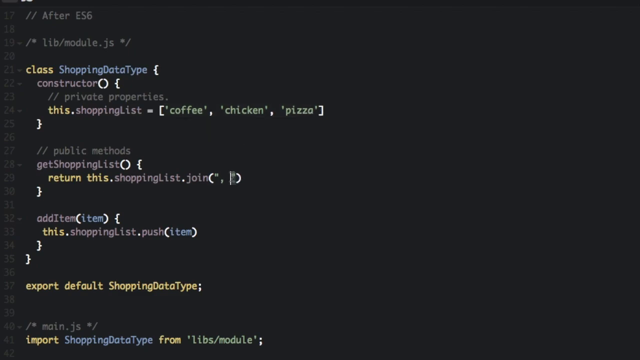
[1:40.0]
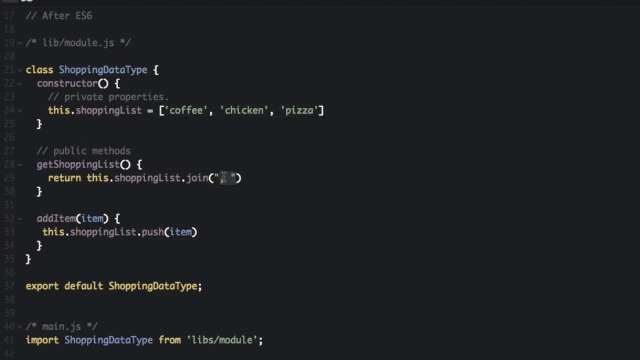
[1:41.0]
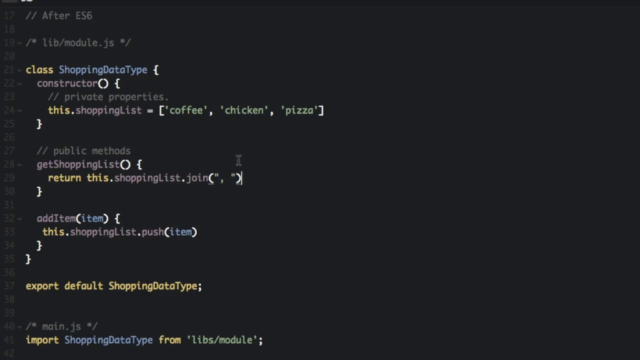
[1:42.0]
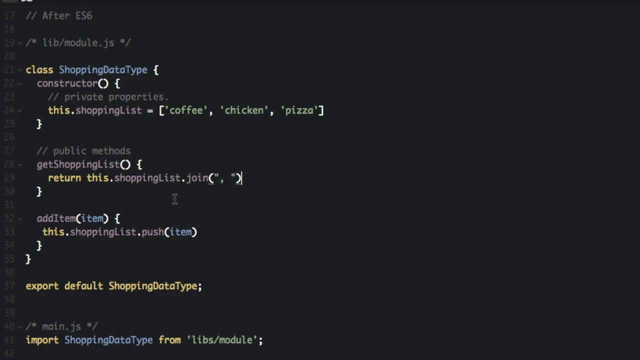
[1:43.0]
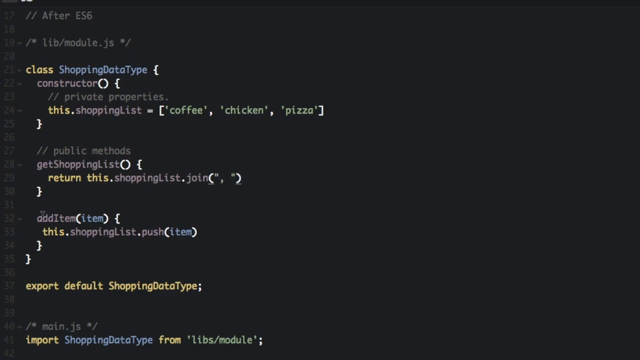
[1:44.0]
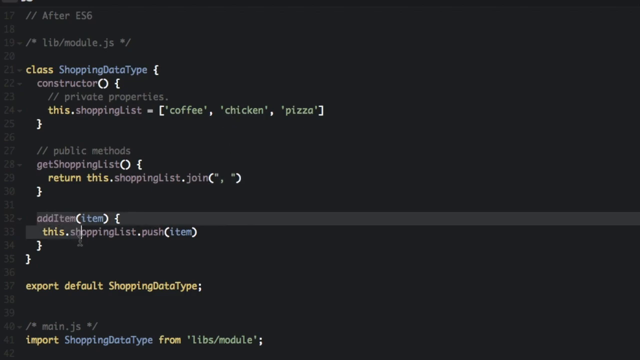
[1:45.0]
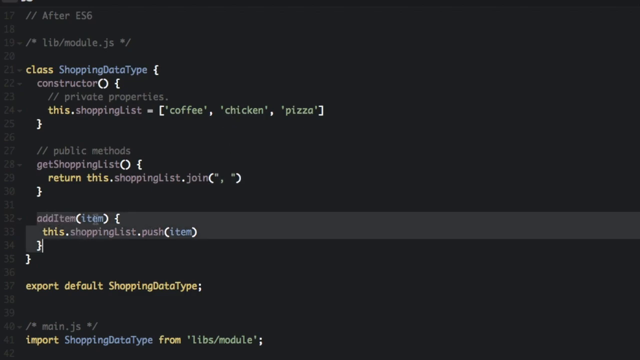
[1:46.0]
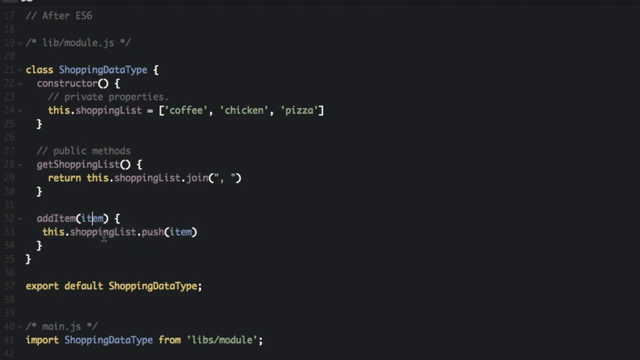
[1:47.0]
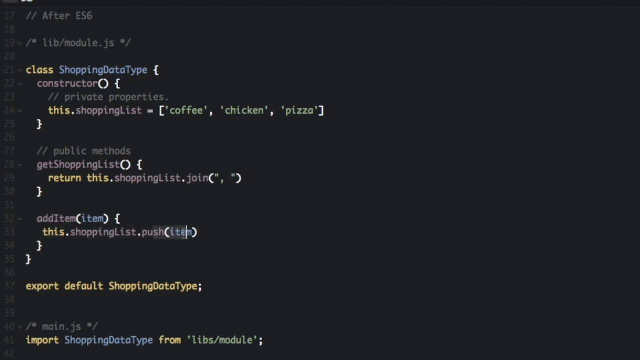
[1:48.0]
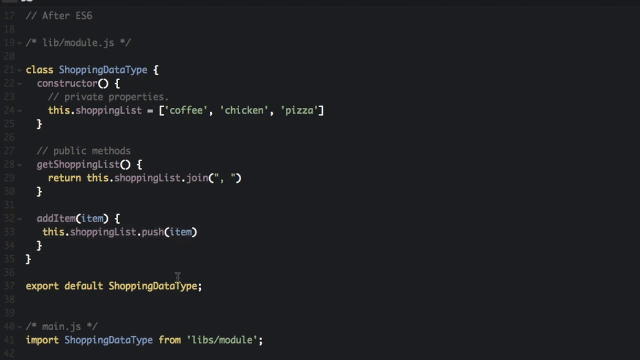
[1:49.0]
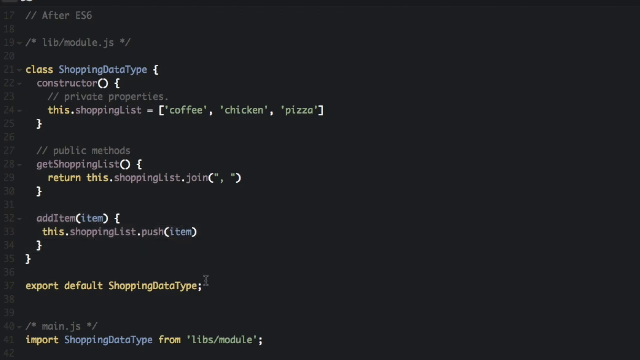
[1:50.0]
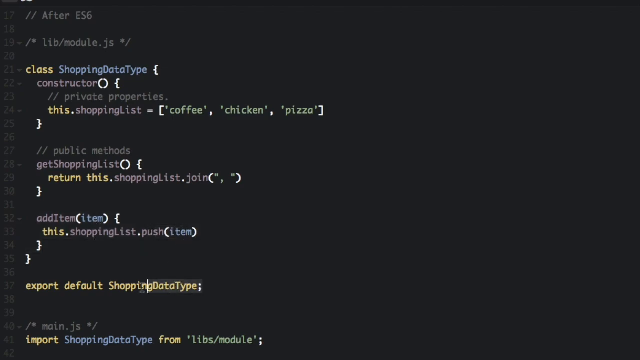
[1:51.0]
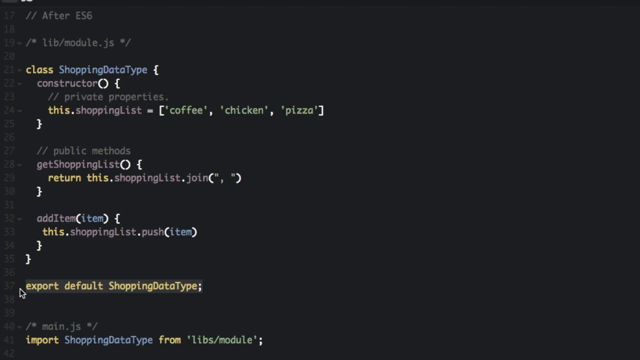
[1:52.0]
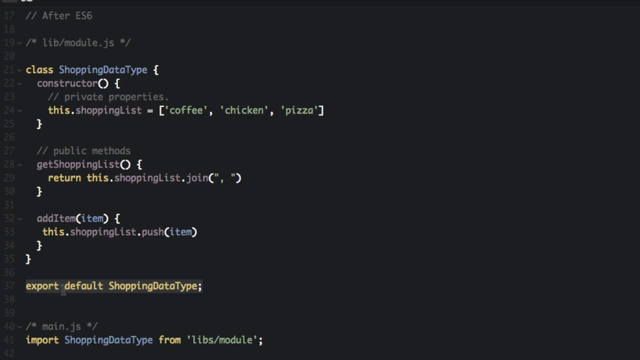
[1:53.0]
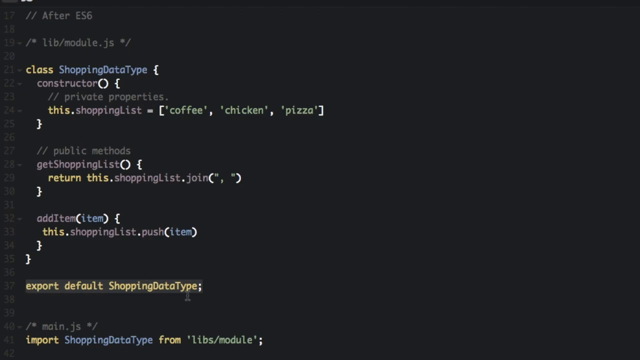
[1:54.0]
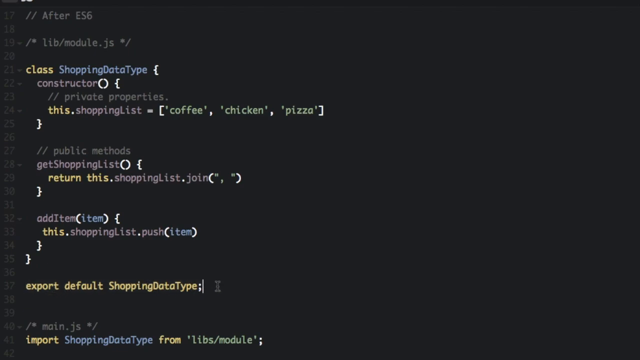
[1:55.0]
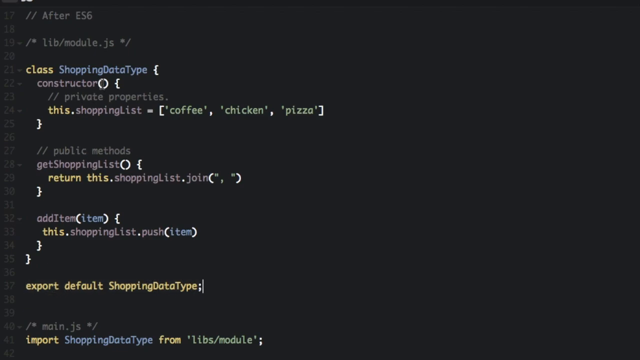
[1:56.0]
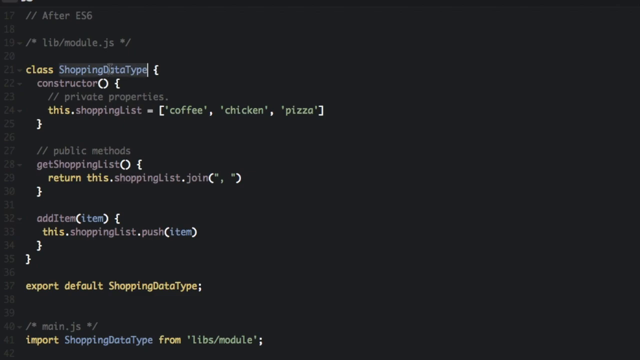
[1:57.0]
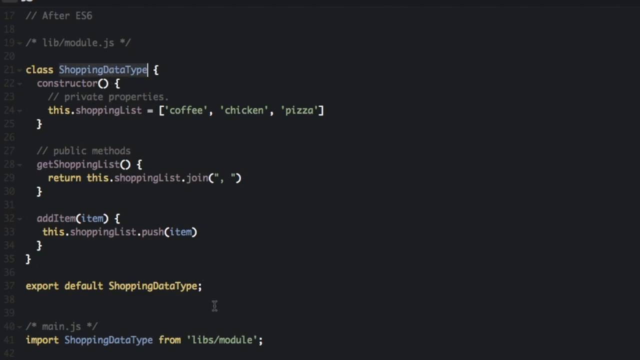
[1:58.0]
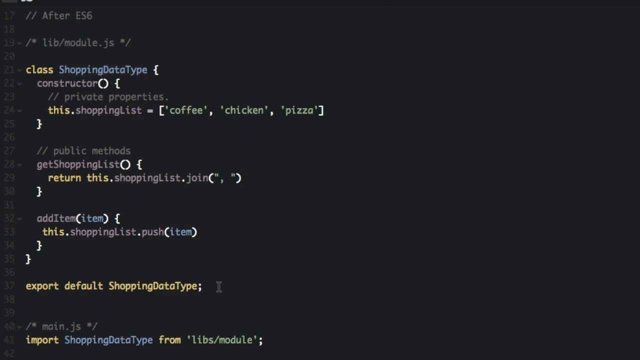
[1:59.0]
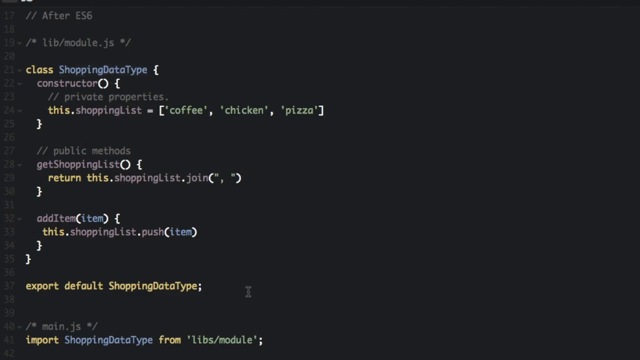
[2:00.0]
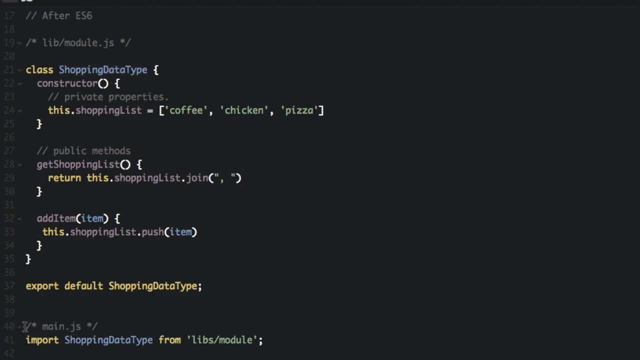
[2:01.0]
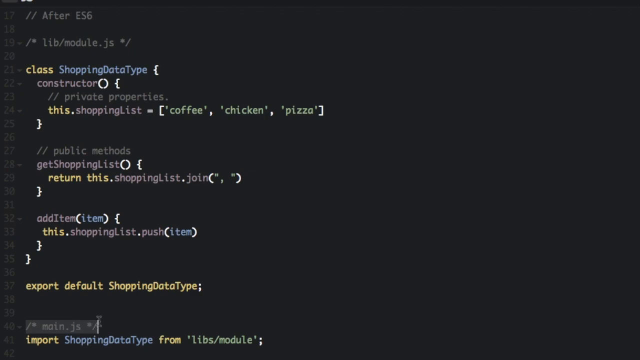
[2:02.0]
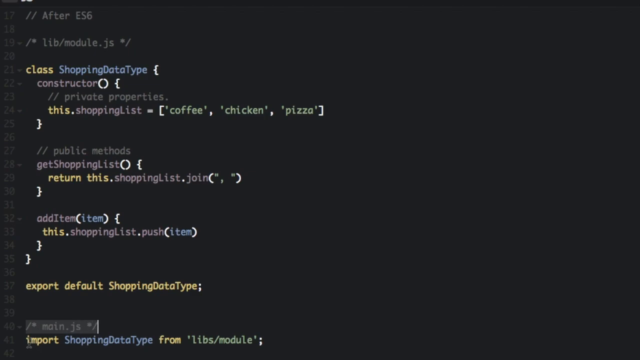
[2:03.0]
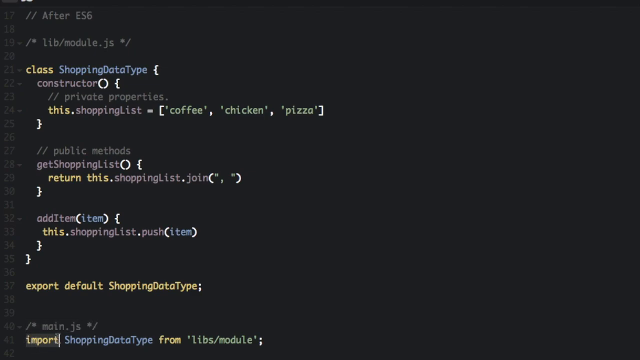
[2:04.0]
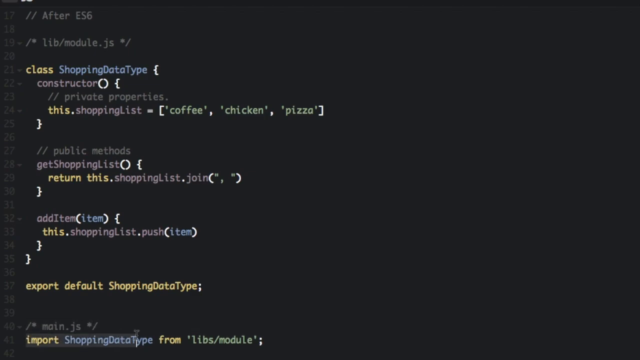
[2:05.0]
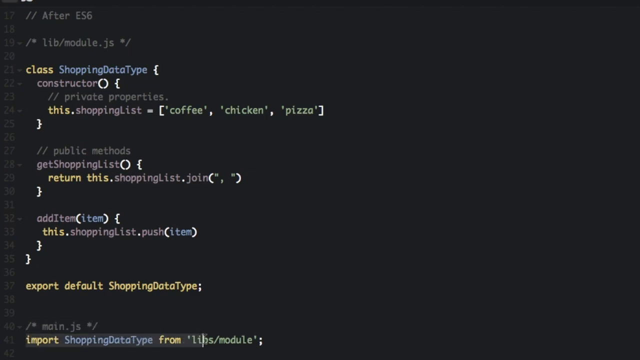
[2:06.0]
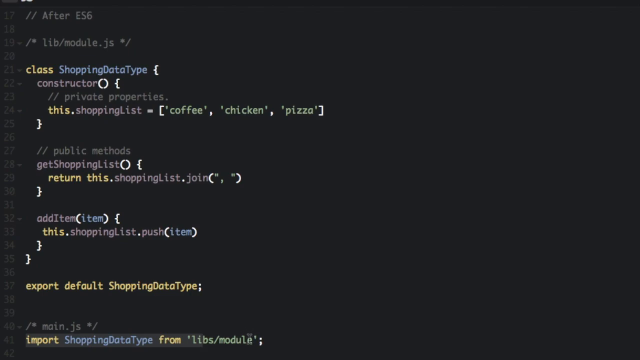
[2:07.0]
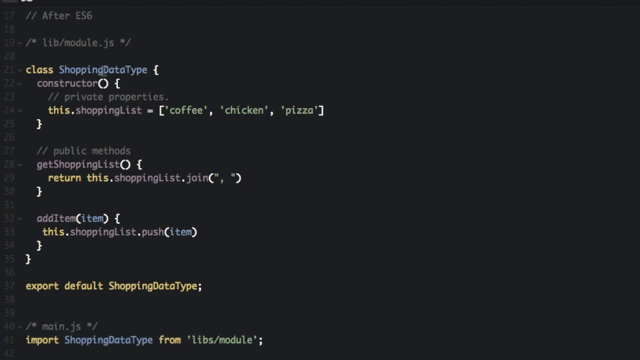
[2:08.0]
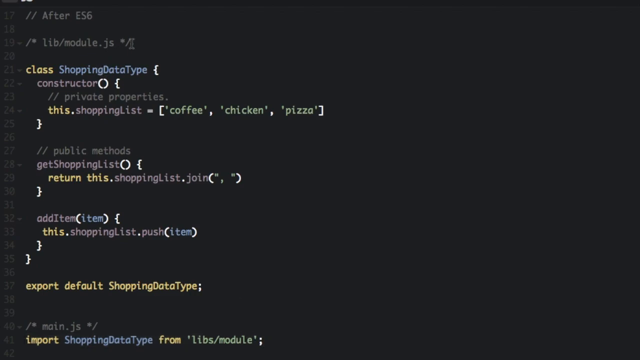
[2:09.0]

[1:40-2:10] Line 27 reads "// public methods", with the two forward slashes in gray. Beneath it, line 28 reads "get ShoppingList" followed by an open and a closed parenthesis and an open bracket; "get" is lowercase, Shopping has an uppercase S and List an uppercase L. The words are in a brownish gray font, and the parentheses and bracket are white. Line 29 has "return this", with both "return" and "this" in yellow, followed by a white period, then "shoppingList.join" in brownish gray with a white period between list and join, then an open parenthesis, a quotation mark, a comma, an up-and-down line, a closed parenthesis and a closed bracket, all of these symbols in white. Line 32 shows "add item", with a few more commands in the code beneath.